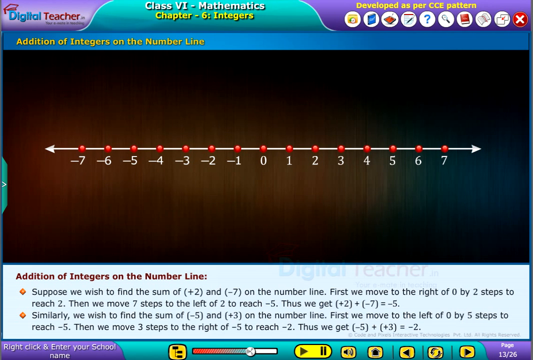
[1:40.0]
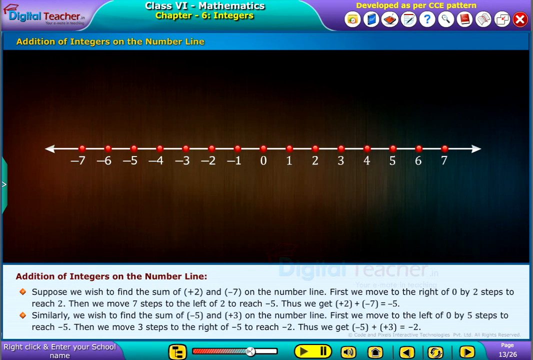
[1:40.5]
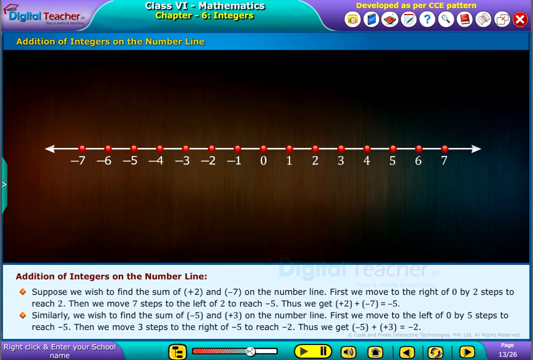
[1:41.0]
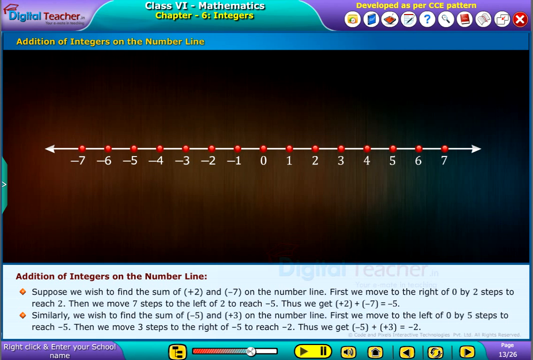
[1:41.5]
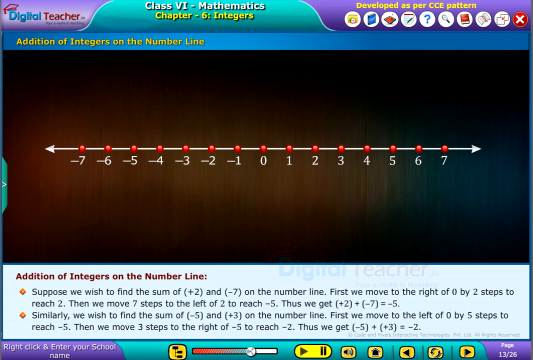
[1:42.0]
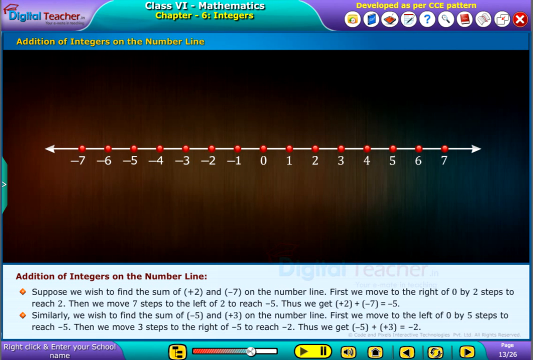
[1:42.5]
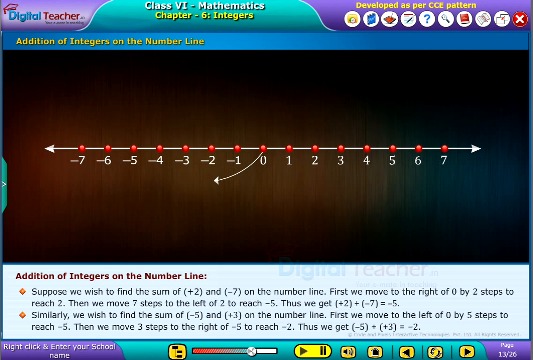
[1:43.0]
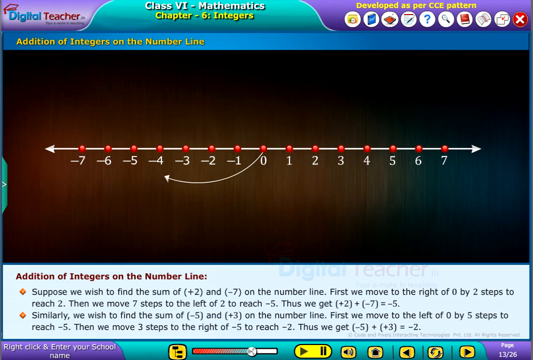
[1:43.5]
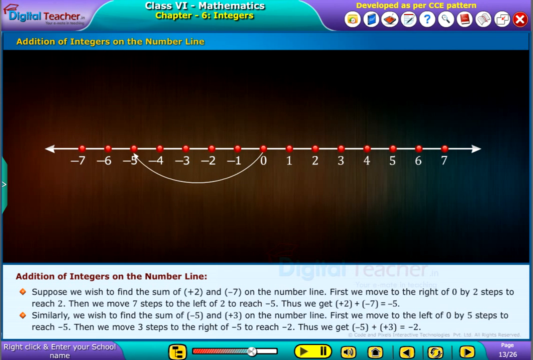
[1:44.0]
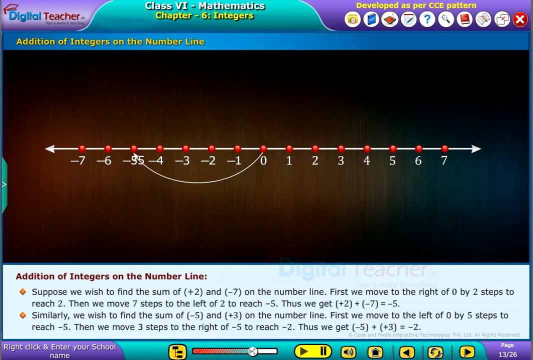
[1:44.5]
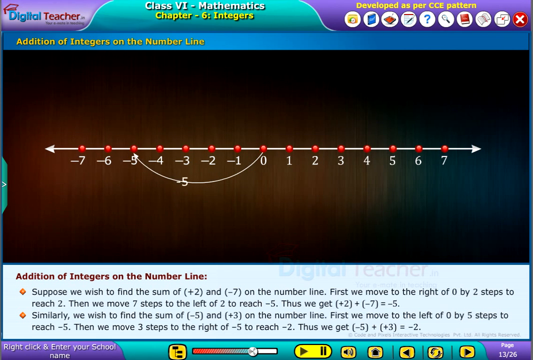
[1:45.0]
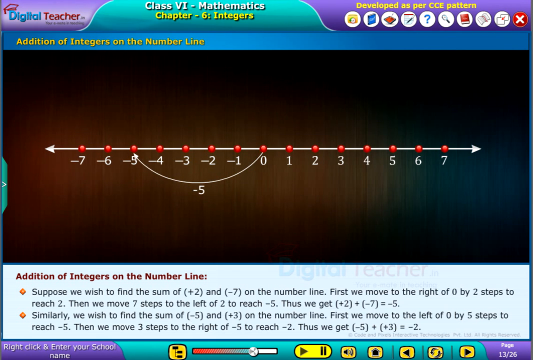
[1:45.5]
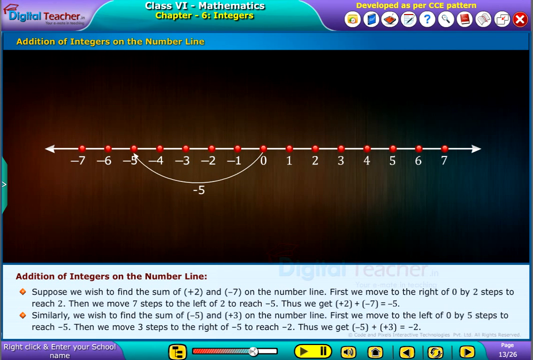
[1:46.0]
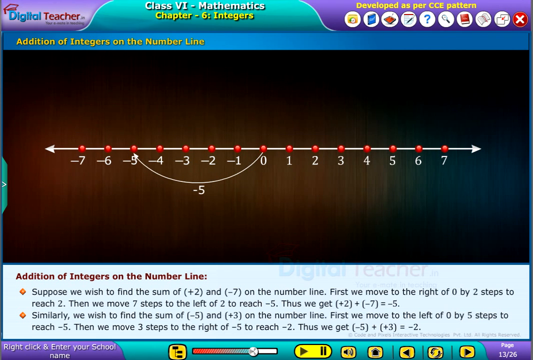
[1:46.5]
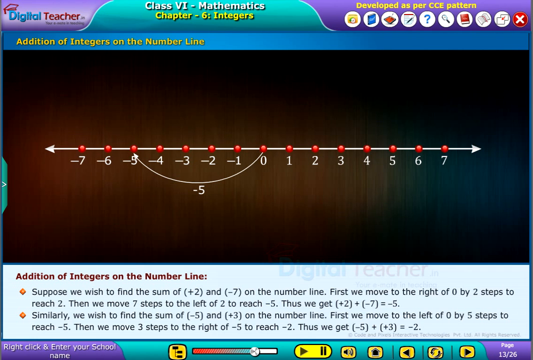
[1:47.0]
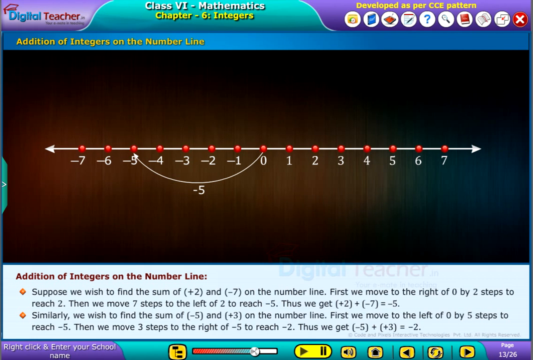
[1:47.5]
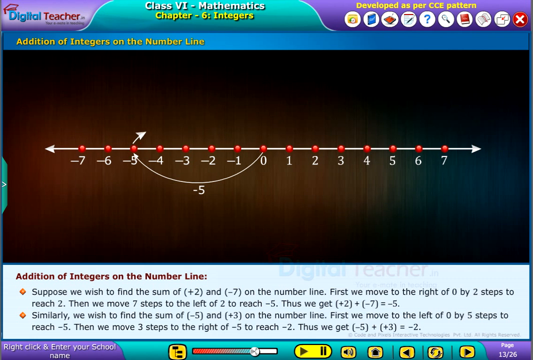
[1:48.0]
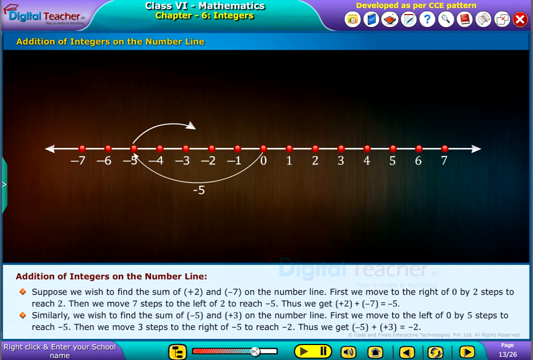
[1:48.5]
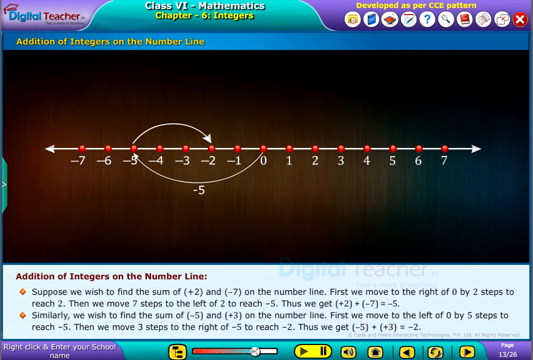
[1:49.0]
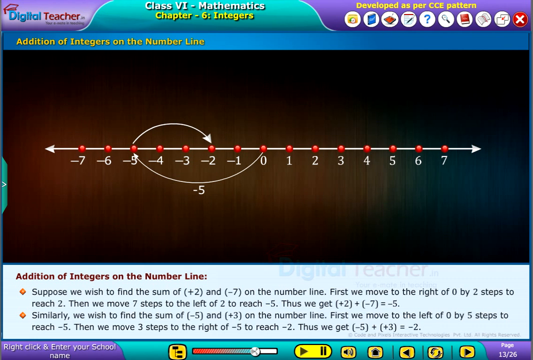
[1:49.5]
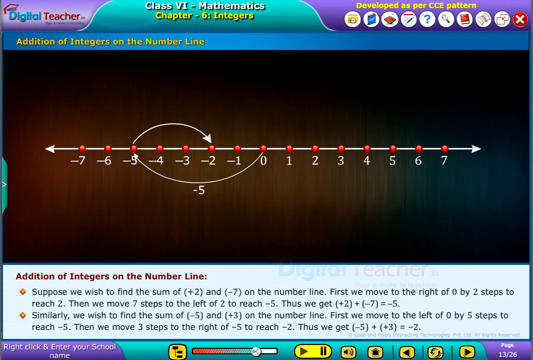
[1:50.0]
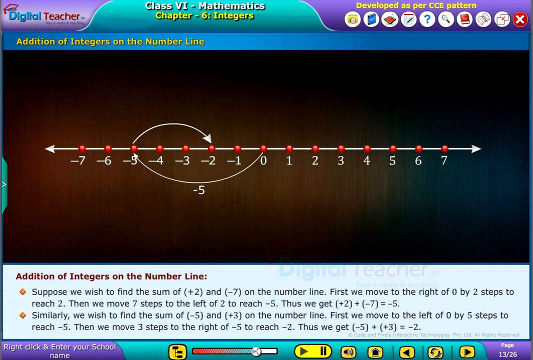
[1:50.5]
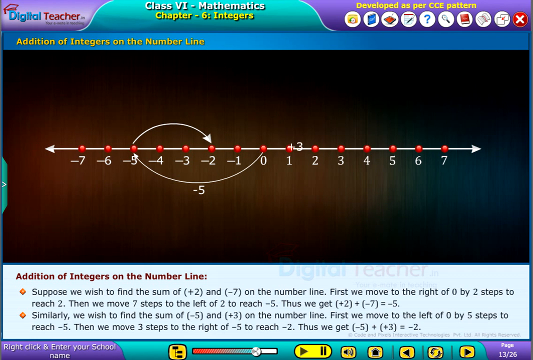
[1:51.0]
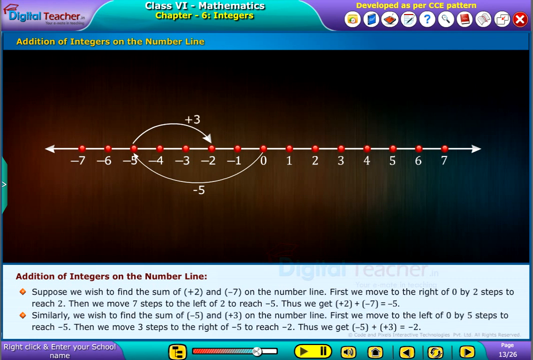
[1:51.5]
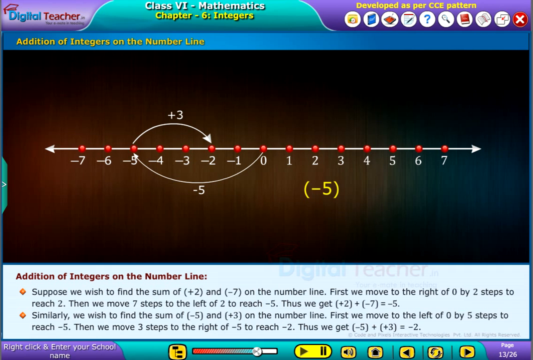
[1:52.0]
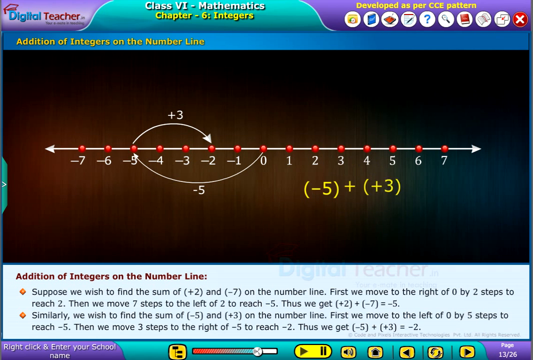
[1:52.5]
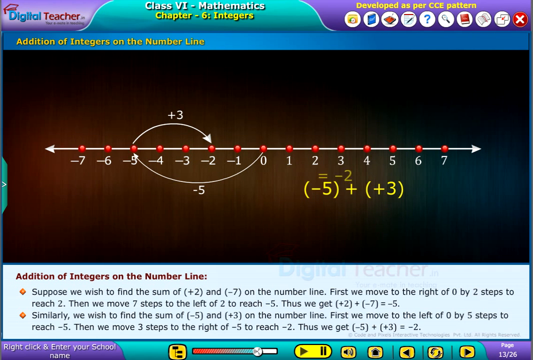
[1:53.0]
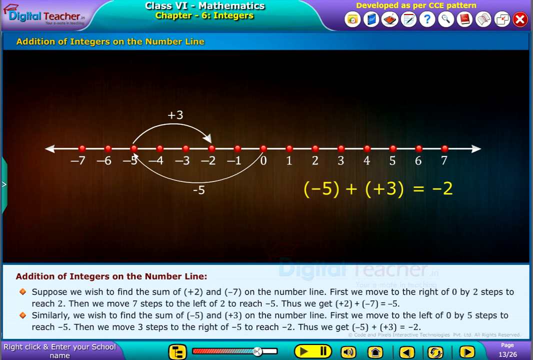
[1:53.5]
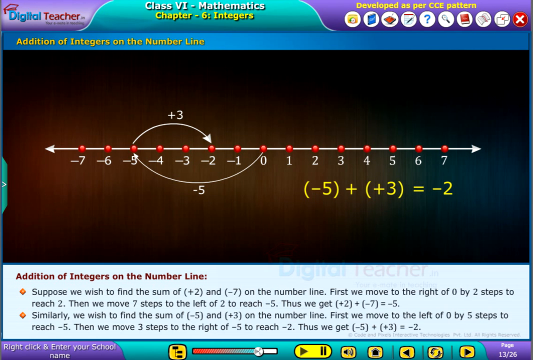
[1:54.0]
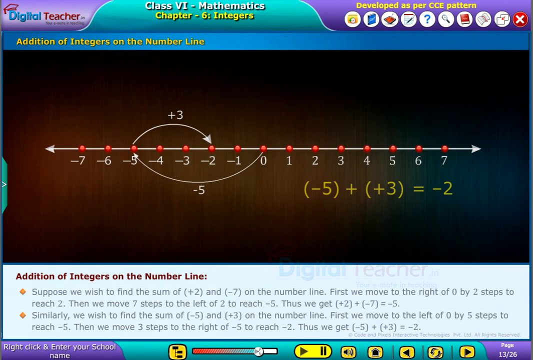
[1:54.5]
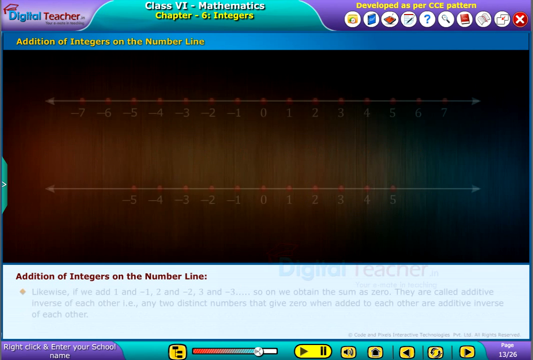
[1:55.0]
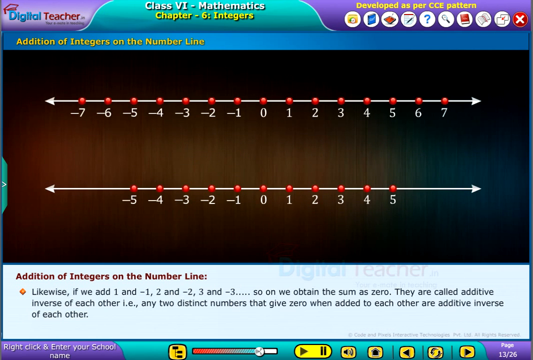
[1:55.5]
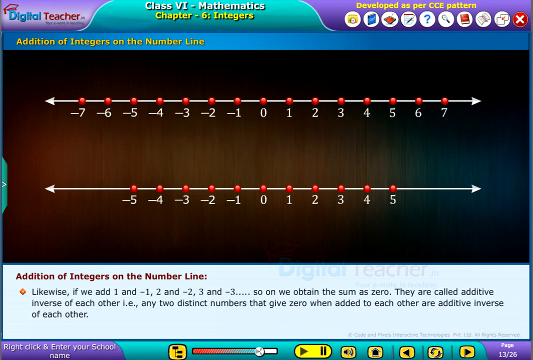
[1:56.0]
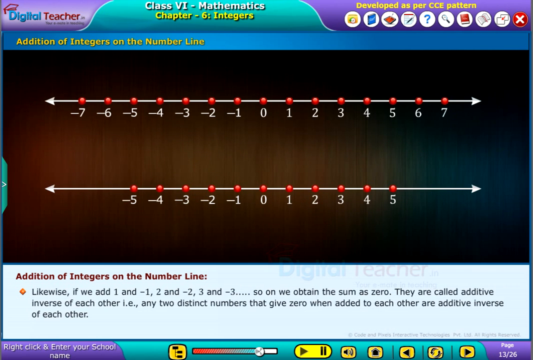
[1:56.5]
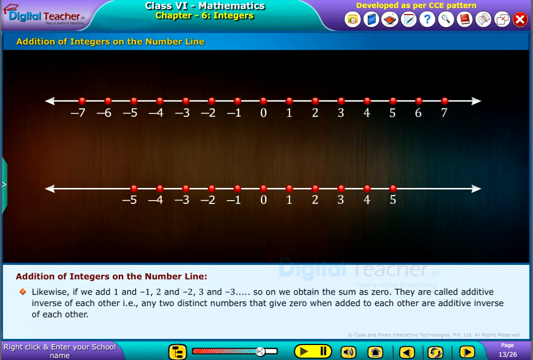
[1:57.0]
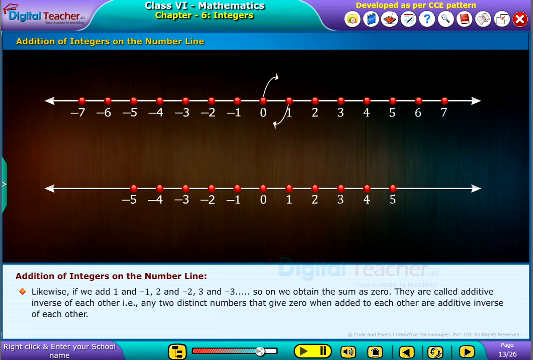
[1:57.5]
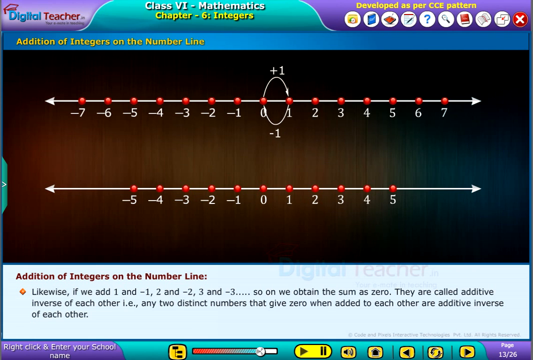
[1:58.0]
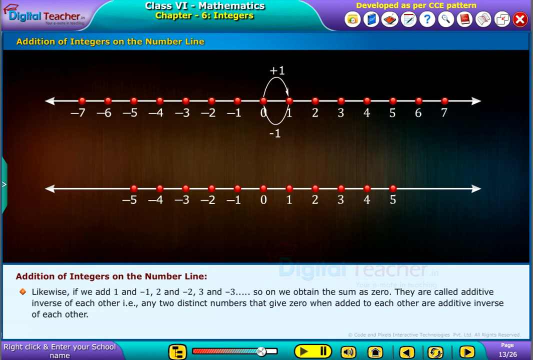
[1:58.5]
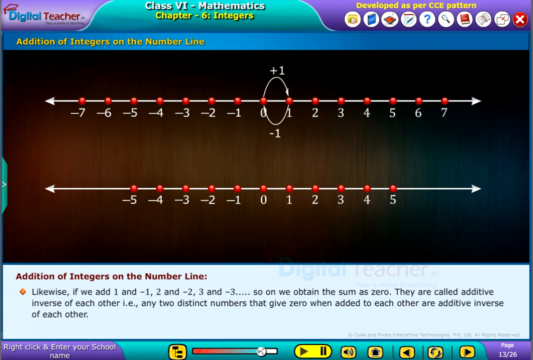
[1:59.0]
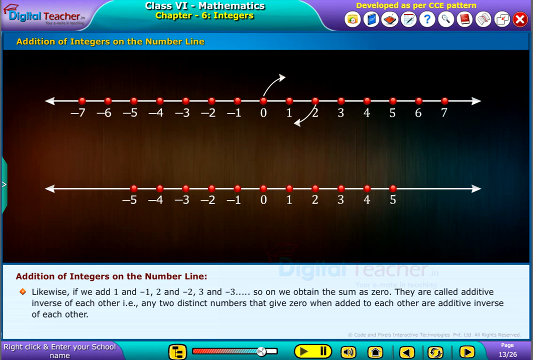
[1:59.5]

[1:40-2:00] A white arrow comes from the bottom of zero and goes left to negative five, with white text underneath the arrow saying "negative five". Another arrow then comes from the top of negative five and jumps to negative two, annotated with "plus three" in white text. Yellow text underneath the number line reads "(negative five) plus (positive three) equals to negative two". The number line content then disappears and two number lines appear: the first ranges from negative seven to positive seven, and the second, below it, ranges from negative five to positive five. The content at the bottom says "likewise, if we add one and negative one, two and negative two, three and negative three, so on, we obtain the sum as zero. They are called additive inverse of each other, i.e. any two distinct numbers that give zero when added to each other are additive inverse of each other." An animation of arrows between numbers follows: from zero, an upward arrow goes to one with "plus one" above it, and from one a downward arrow goes back to zero with "negative one" below it. The same is done for positive two.